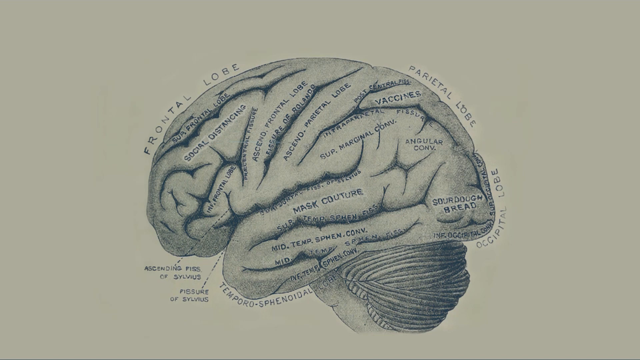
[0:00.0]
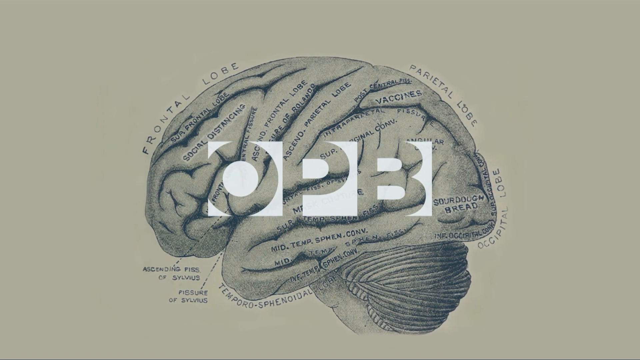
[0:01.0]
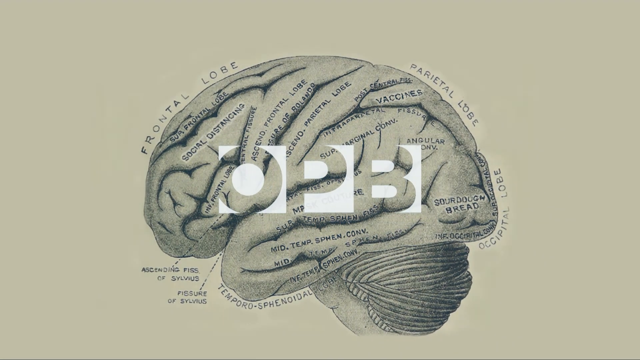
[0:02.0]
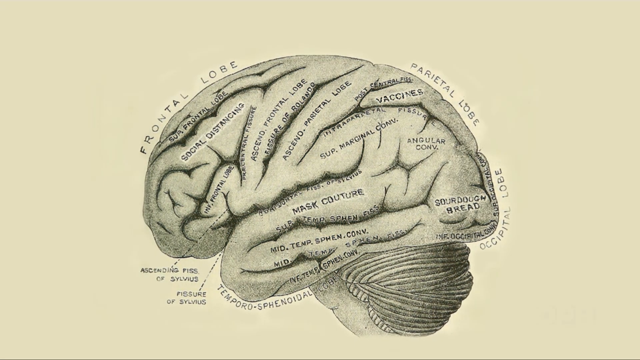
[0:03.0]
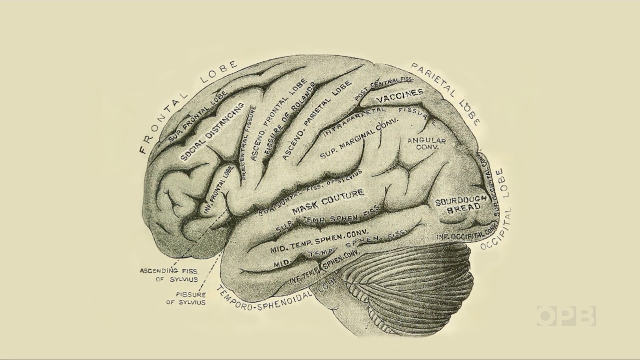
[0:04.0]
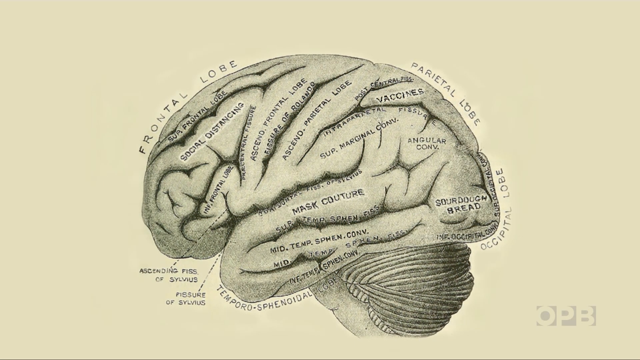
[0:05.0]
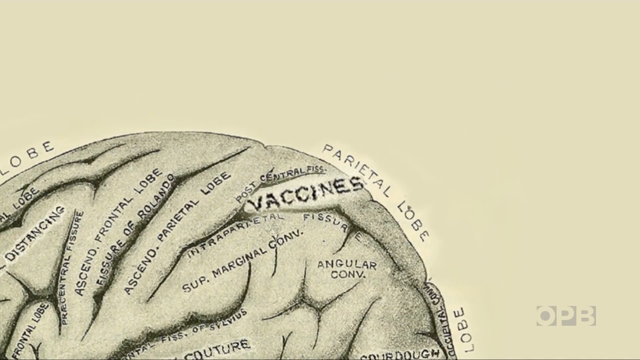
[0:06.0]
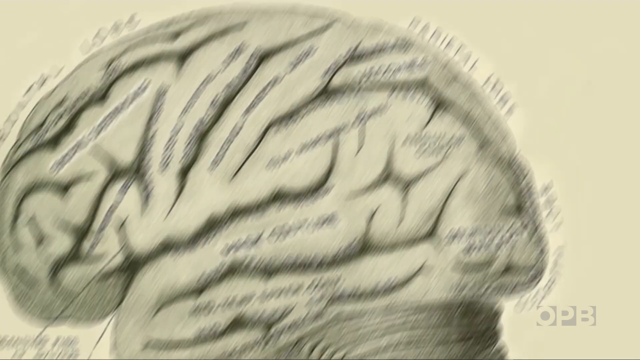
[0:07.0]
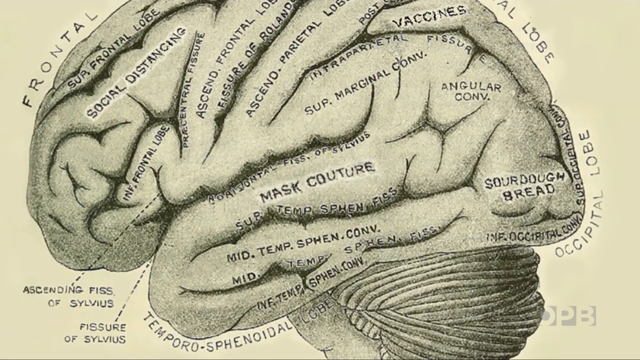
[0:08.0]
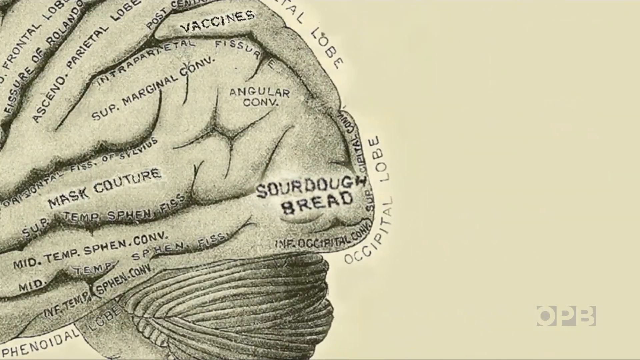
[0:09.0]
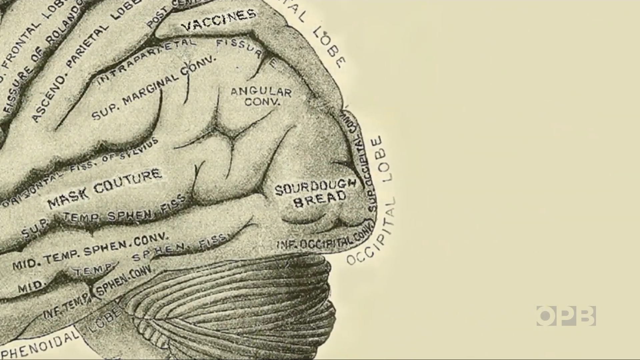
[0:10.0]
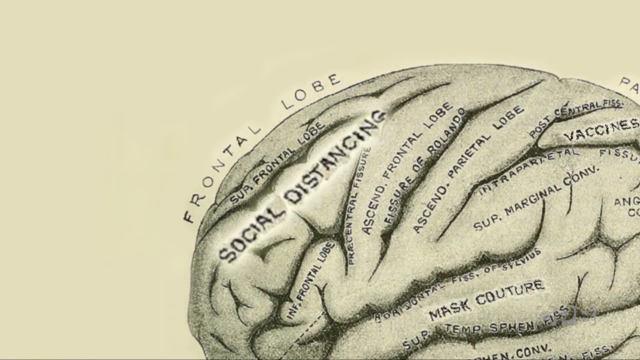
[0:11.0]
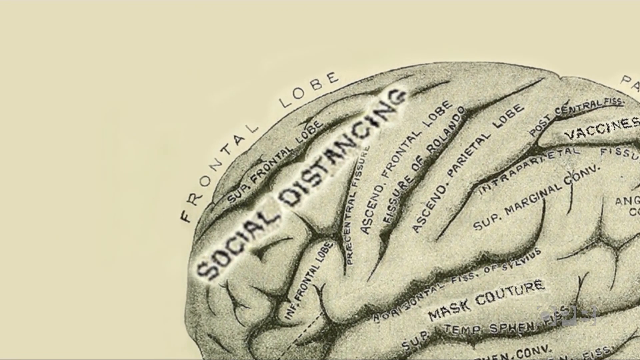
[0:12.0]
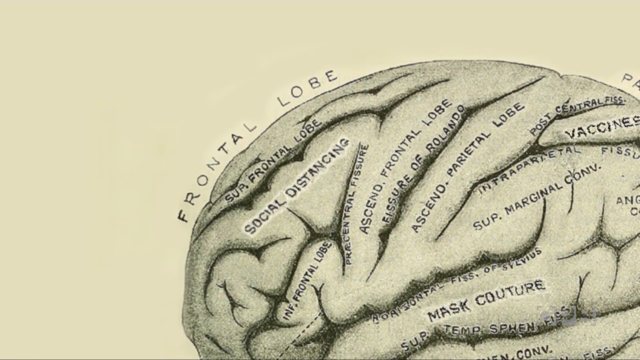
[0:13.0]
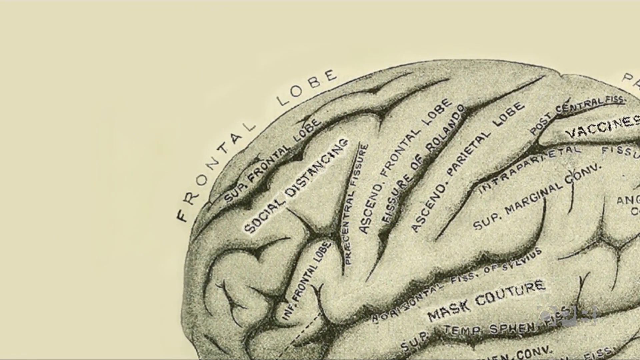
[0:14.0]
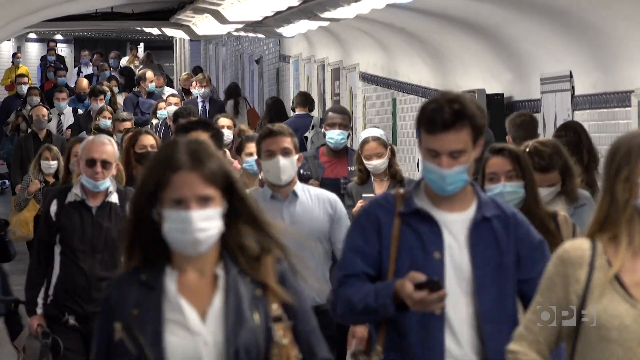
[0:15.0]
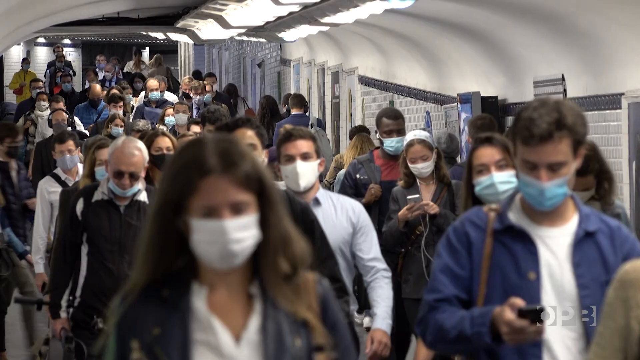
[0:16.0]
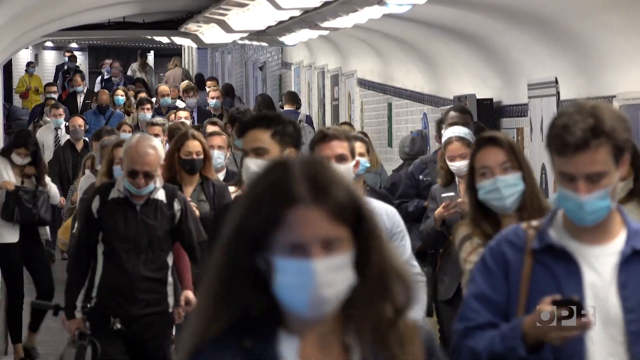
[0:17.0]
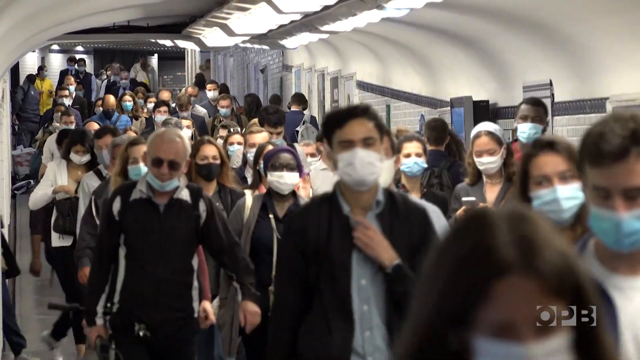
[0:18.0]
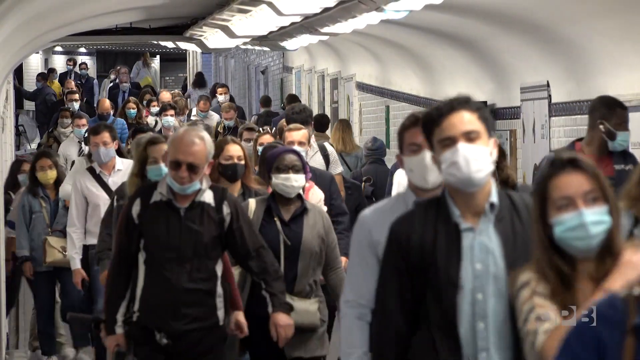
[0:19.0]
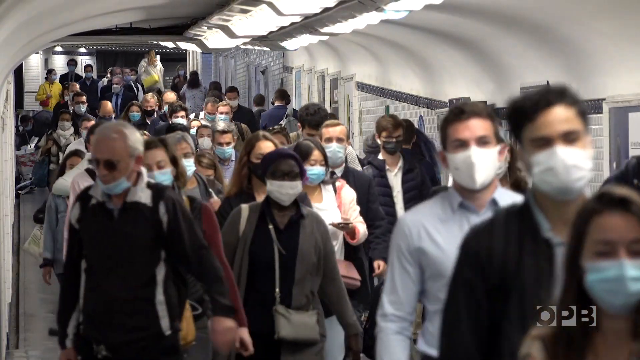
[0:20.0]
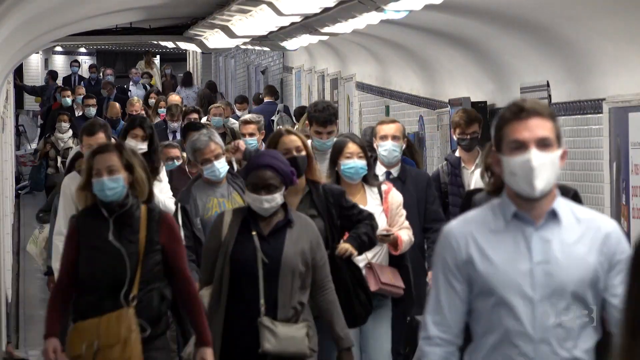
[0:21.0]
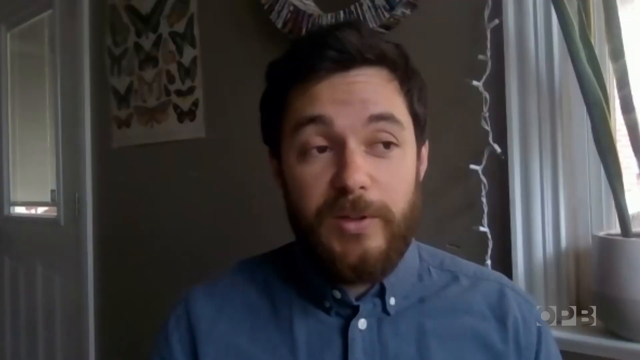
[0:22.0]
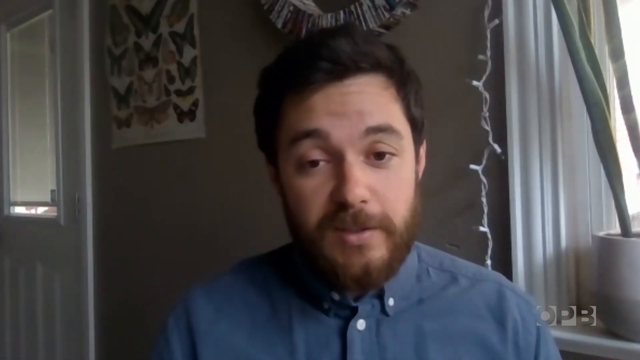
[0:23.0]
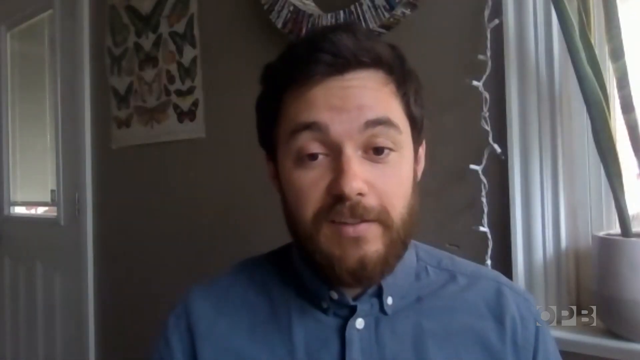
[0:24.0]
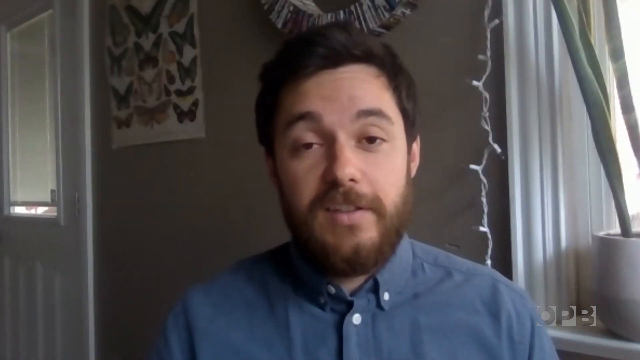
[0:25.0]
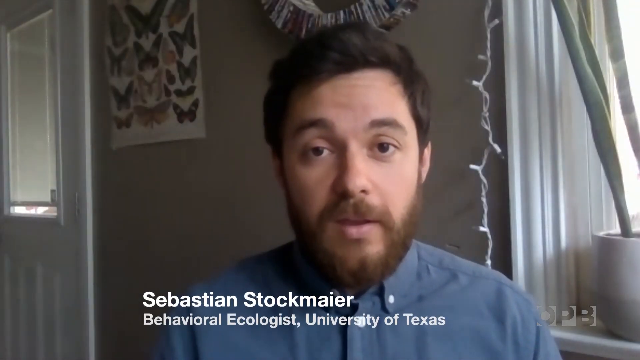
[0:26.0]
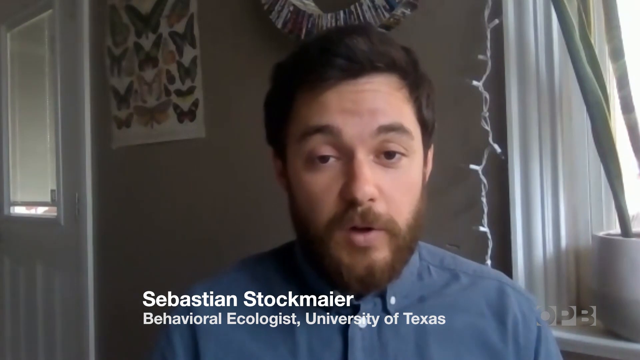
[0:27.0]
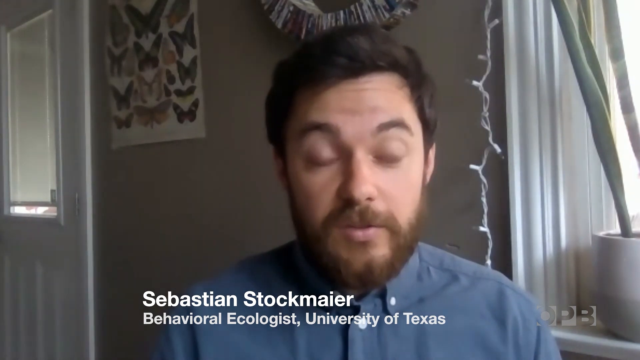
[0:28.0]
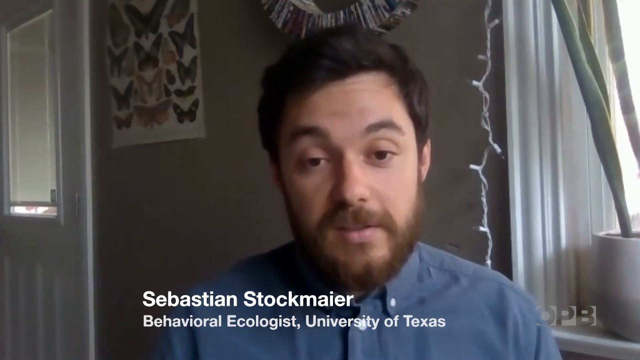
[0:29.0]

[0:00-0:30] The text "OPB" appears, followed by an image of a brain with words on it: "vaccines", "mask", "sourdough bread", "social distancing" and "frontal lobe". The scene cuts to many people walking down an airport terminal wearing masks. A man with a light brown mustache and beard and darker brown hair, wearing a blue shirt, appears next; he looks like he is being interviewed or talking to a camera himself, and he looks like he is at home, probably being interviewed over Zoom. On-screen text identifies him as "Sebastian Stockmeyer", a behavioral ecologist, and when he appears later the text names "the University of Texas".